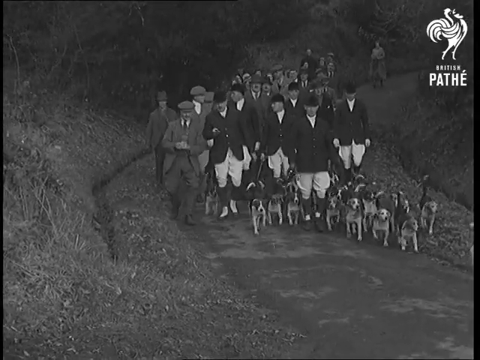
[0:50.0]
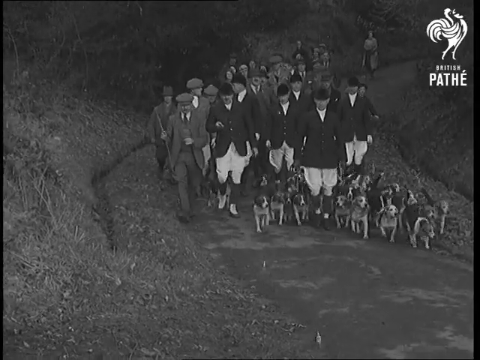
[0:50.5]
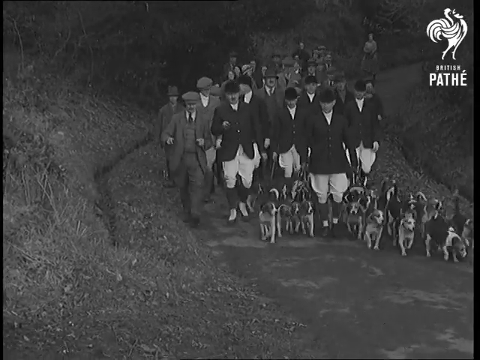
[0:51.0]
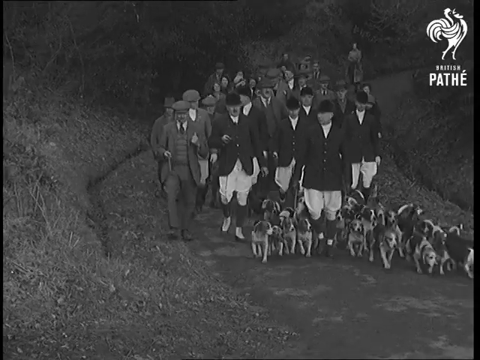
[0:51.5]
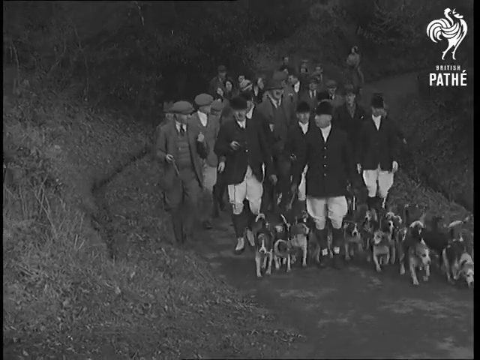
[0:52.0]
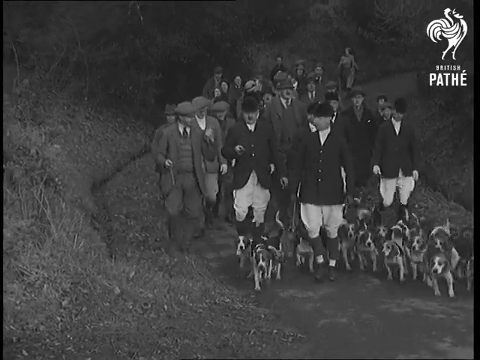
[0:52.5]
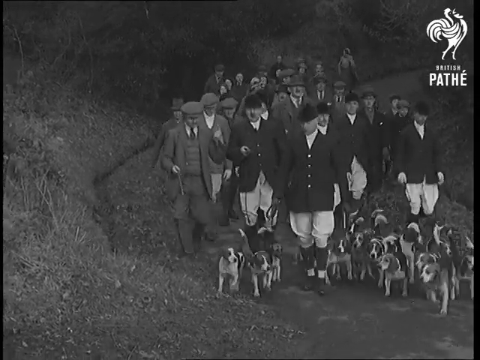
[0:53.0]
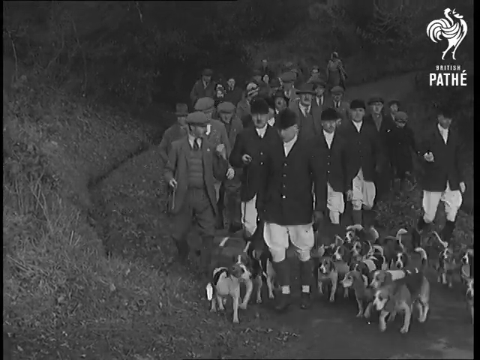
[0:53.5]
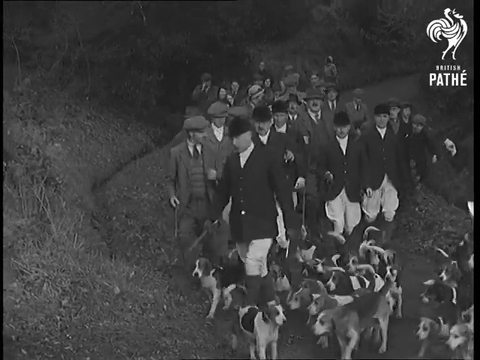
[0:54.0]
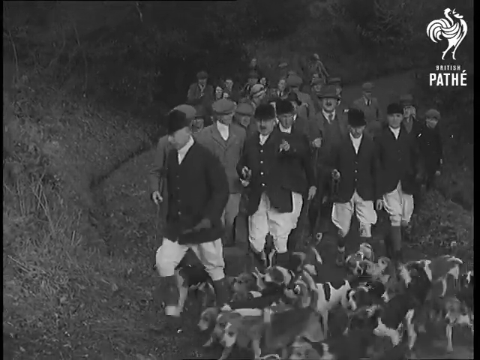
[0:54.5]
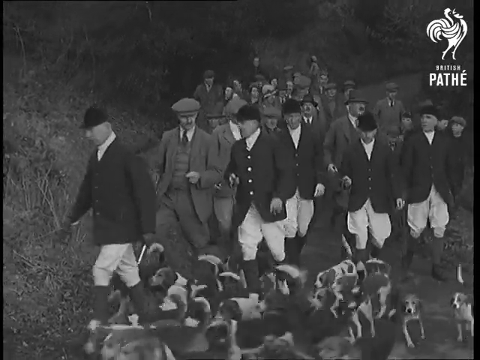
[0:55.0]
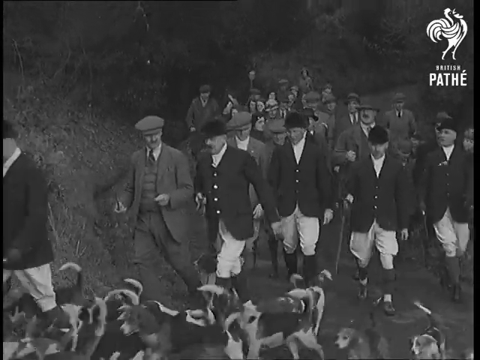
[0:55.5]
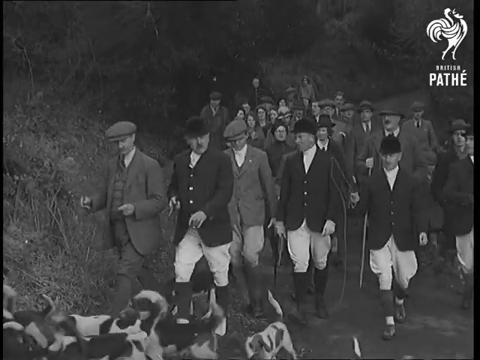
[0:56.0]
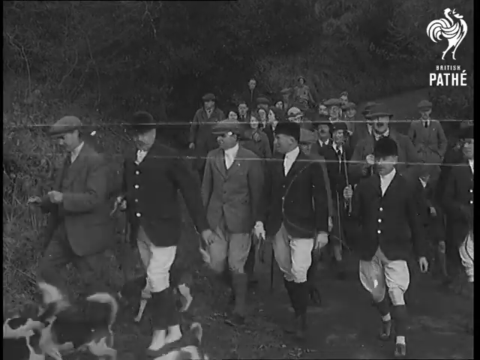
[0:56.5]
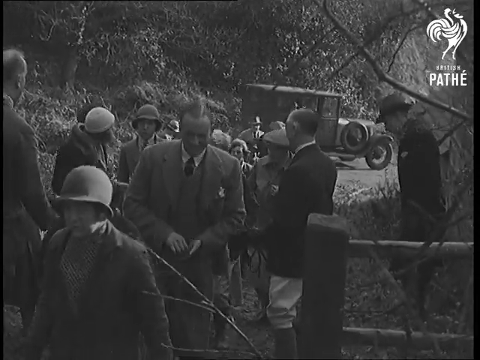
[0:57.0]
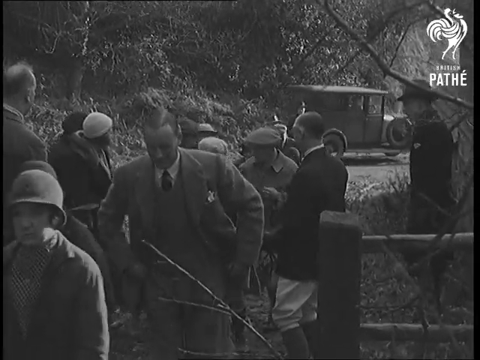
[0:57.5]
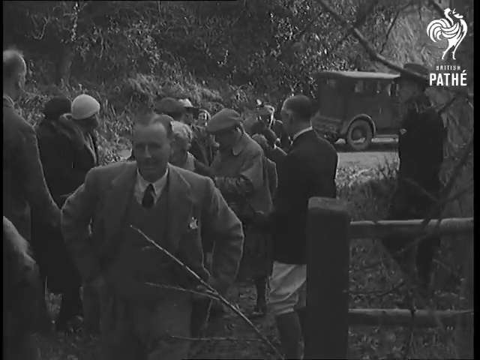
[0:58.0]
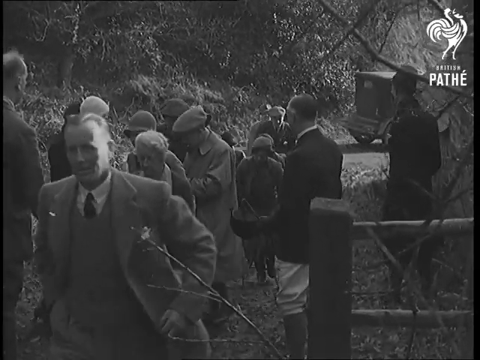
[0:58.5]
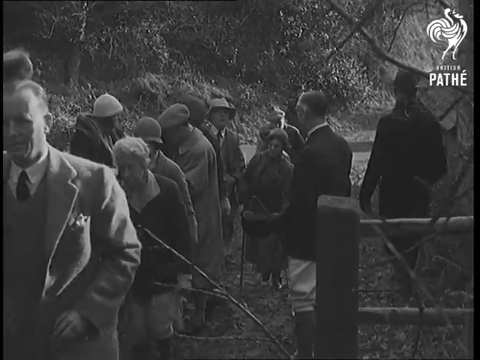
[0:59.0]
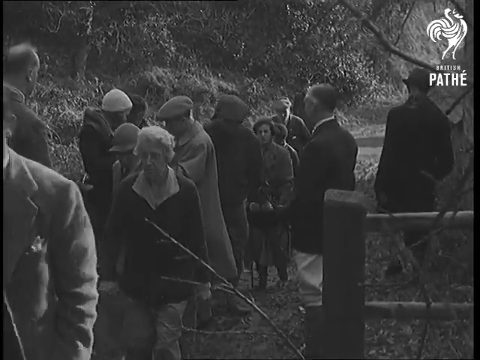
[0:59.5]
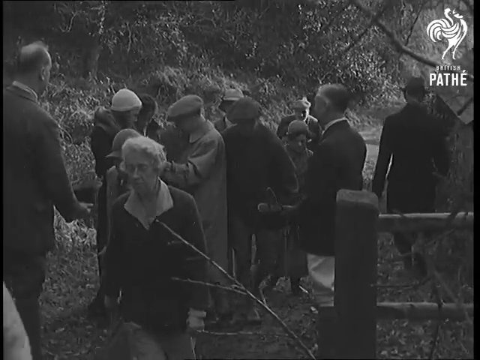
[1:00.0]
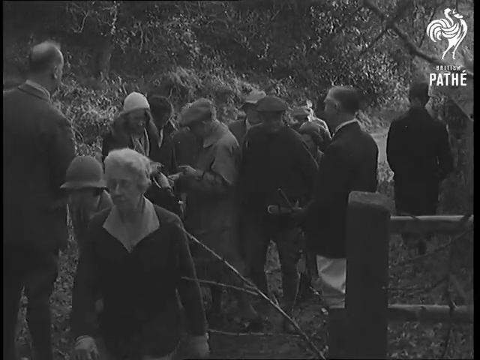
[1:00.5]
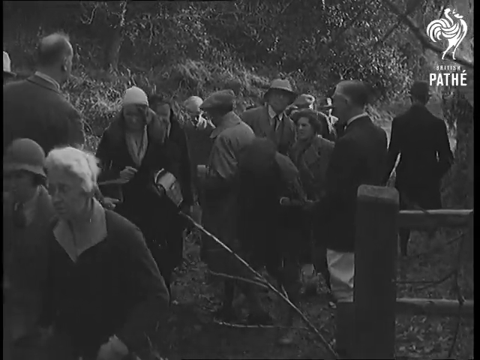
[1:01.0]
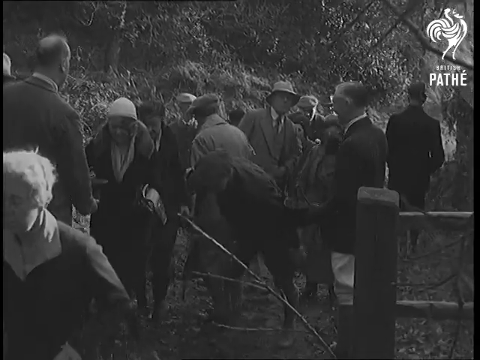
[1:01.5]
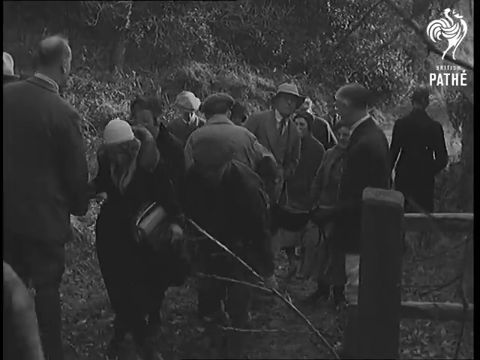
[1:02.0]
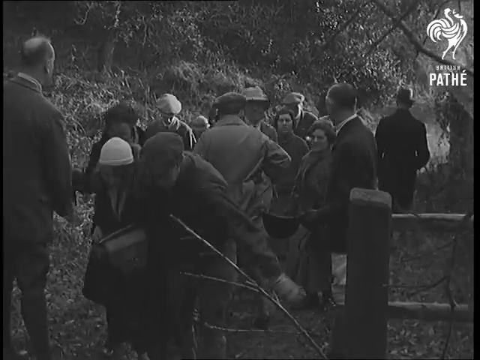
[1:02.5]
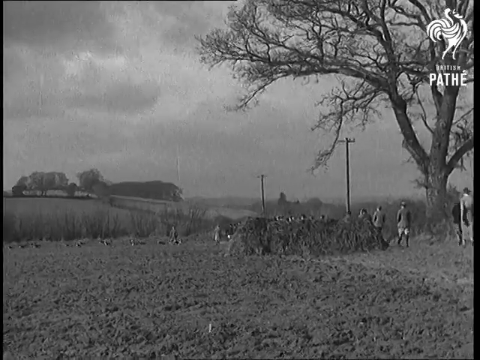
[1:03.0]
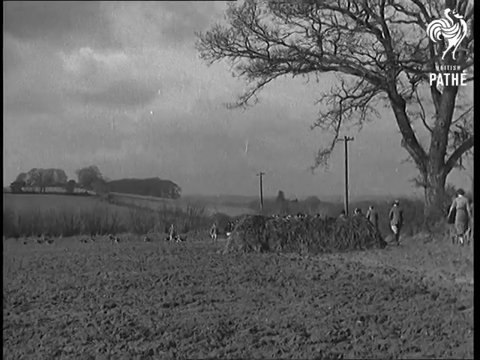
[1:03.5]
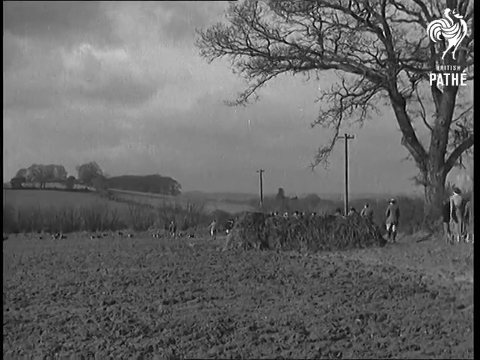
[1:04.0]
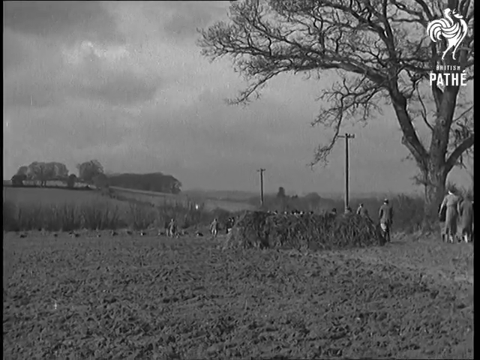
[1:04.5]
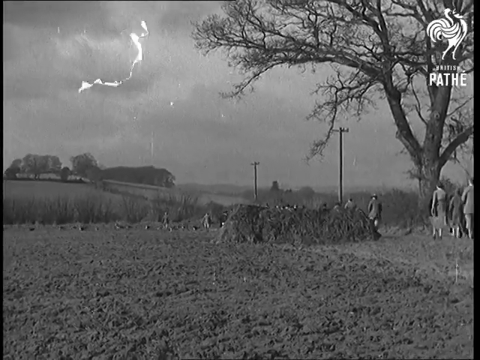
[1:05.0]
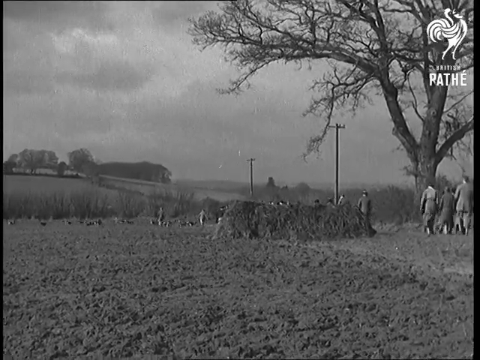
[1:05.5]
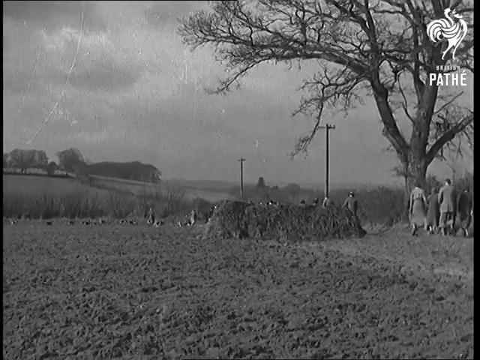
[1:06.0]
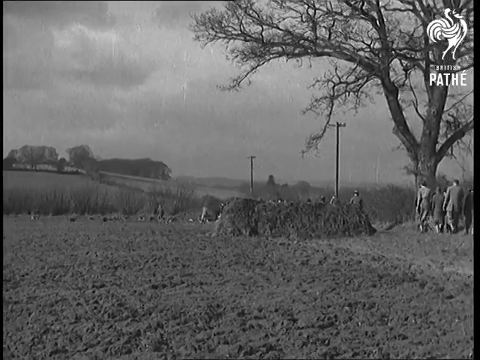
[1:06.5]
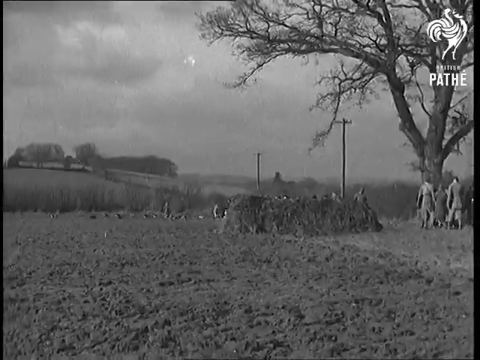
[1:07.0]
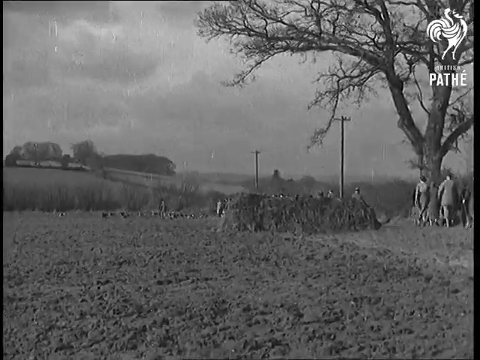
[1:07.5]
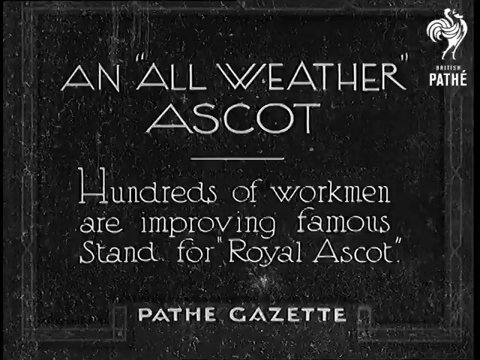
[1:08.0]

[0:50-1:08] In black and white, what looks like around six to seven men in black coats, black hats, baggy white pants and black boots walk along a pathway, followed by around 50 other people wearing coats and top hats or something like that, very high-class dress. Around 20 beagles surround the men in black coats at the front and walk along with them. In the first scene, a curved path runs from the top right, curves to the left middle, and then curves down to the bottom right. The men walk along the path with the beagles following or surrounding them at the front, while the other people in the background casually follow. They walk toward the bottom right, then go past the camera toward the bottom left. The scene changes to one where it looks like many people are walking past and through a fence, with a car in the background that drives away; then it looks like the men are greeting each other. In the final scene, a large field appears, with the dogs walking from left to right in the background and some people walking from the bottom right toward the middle.